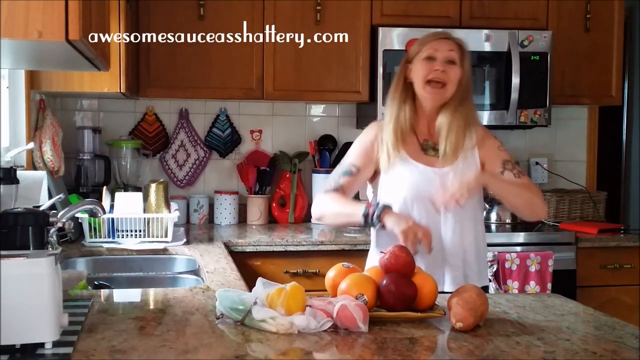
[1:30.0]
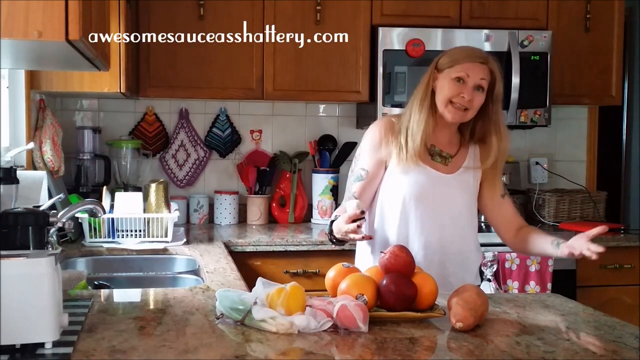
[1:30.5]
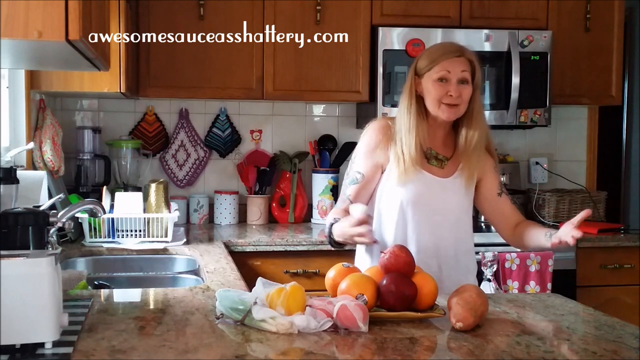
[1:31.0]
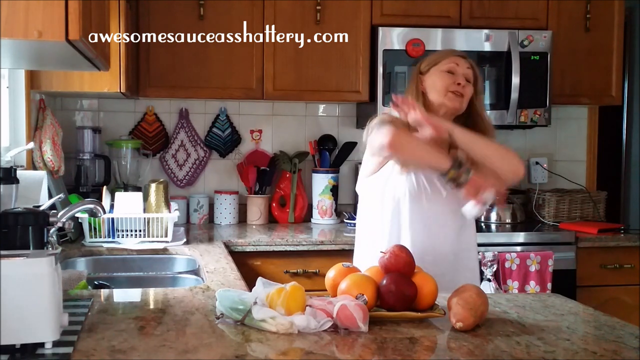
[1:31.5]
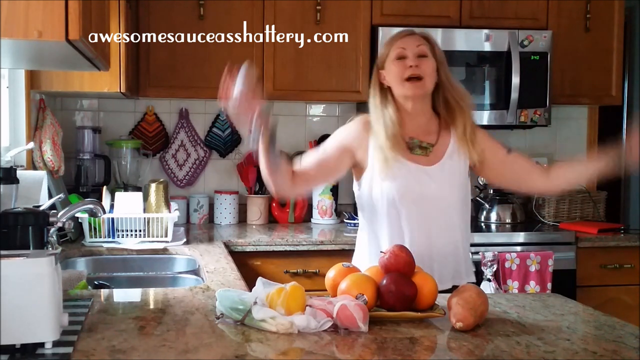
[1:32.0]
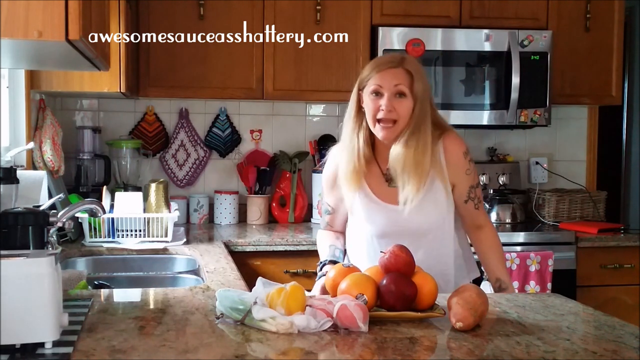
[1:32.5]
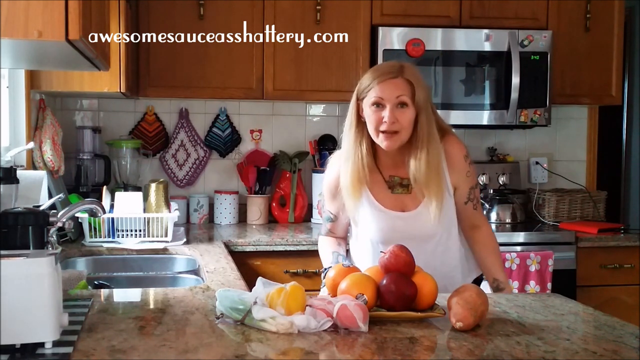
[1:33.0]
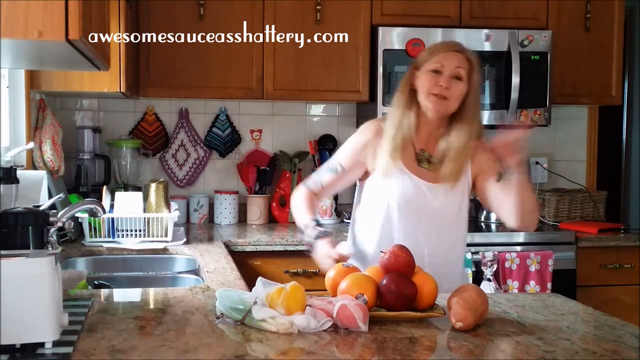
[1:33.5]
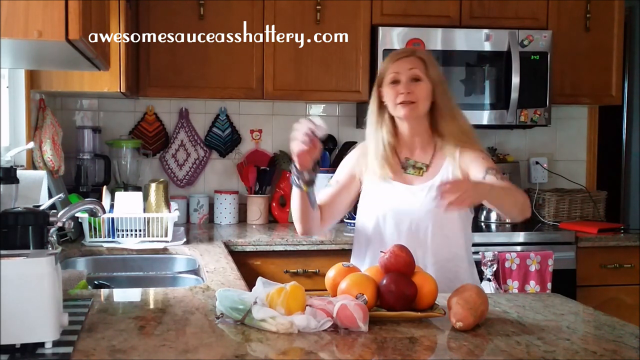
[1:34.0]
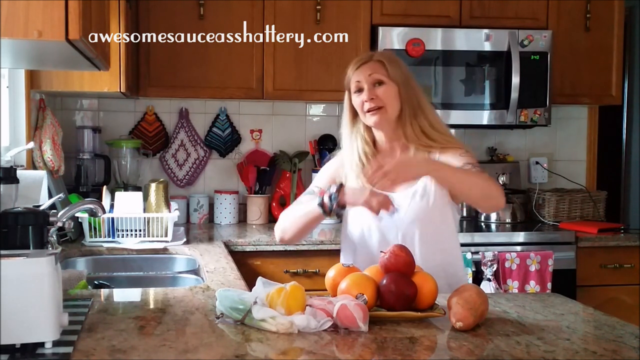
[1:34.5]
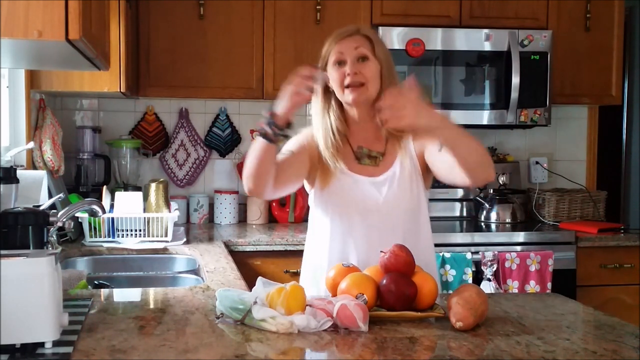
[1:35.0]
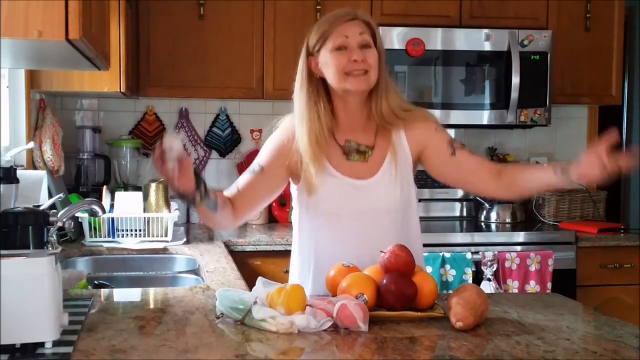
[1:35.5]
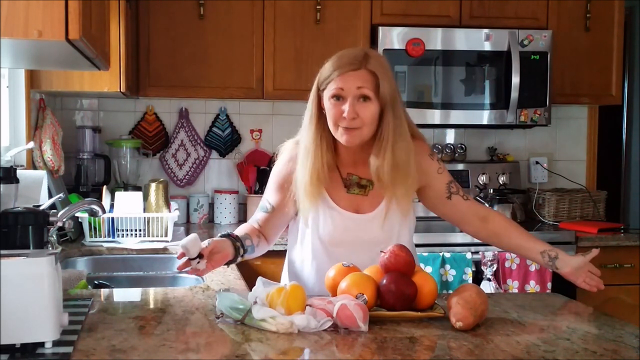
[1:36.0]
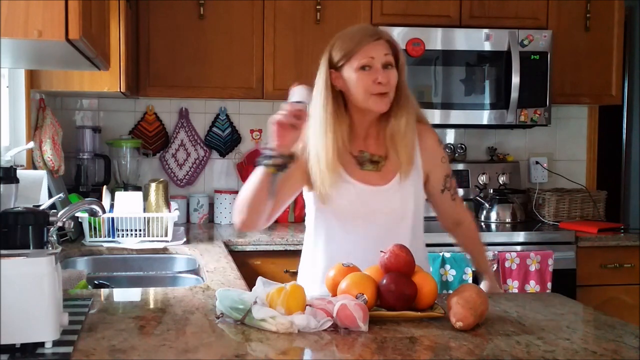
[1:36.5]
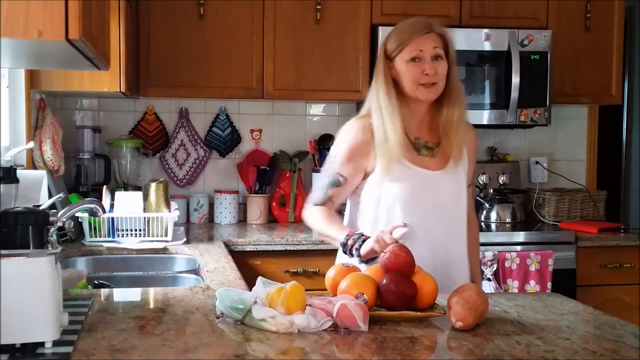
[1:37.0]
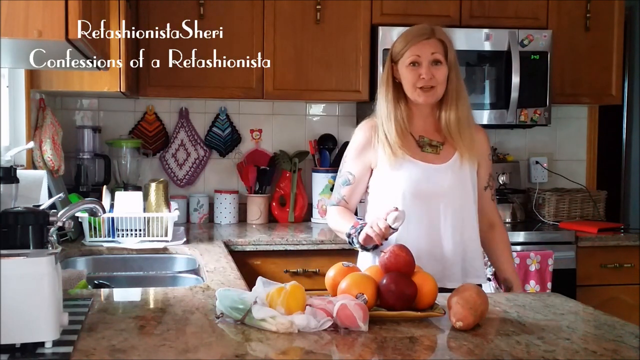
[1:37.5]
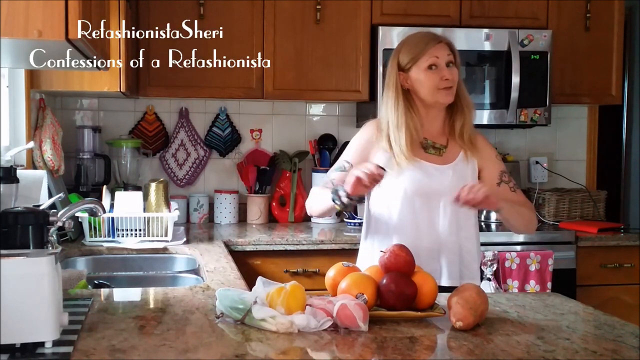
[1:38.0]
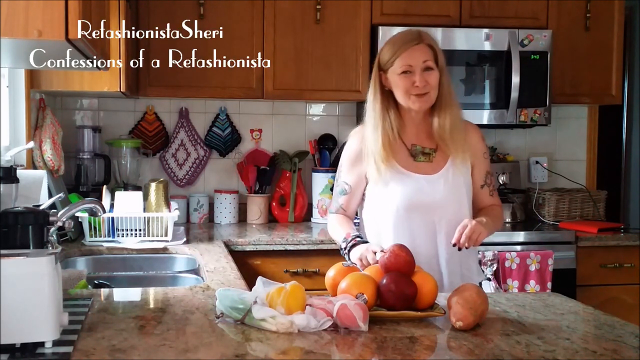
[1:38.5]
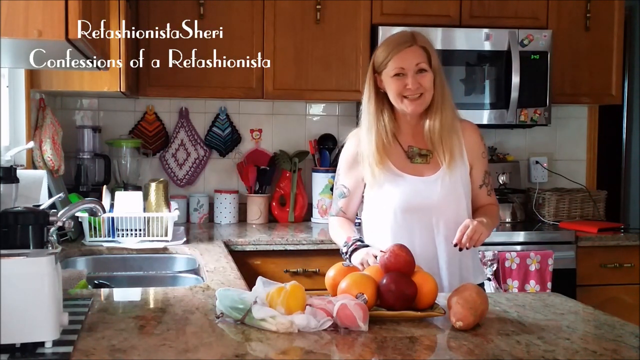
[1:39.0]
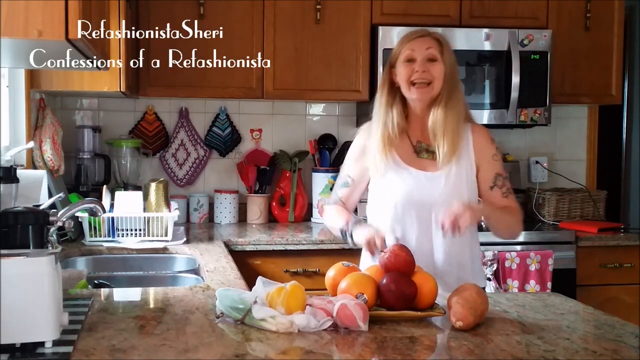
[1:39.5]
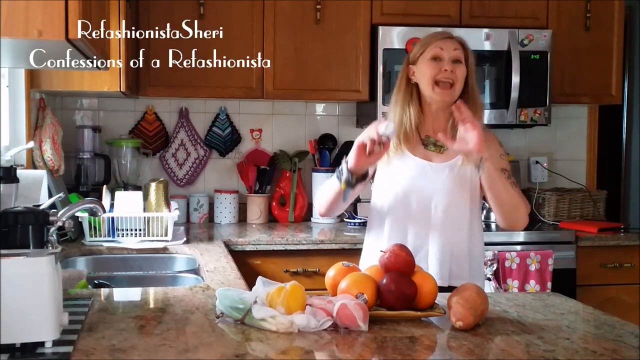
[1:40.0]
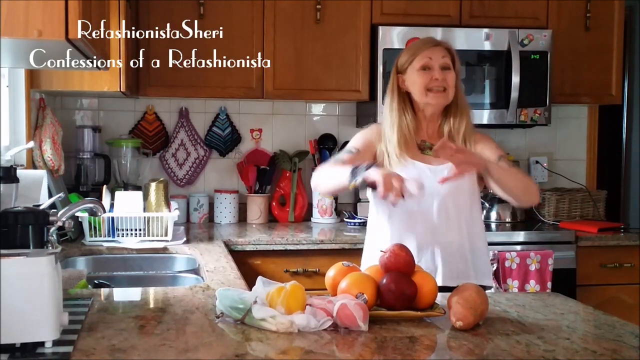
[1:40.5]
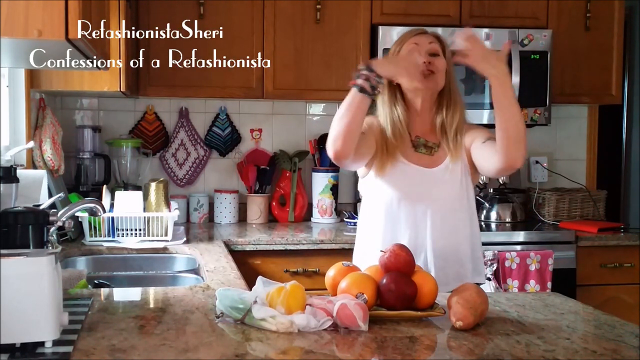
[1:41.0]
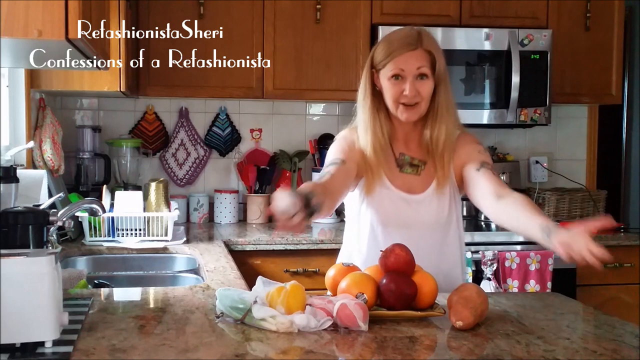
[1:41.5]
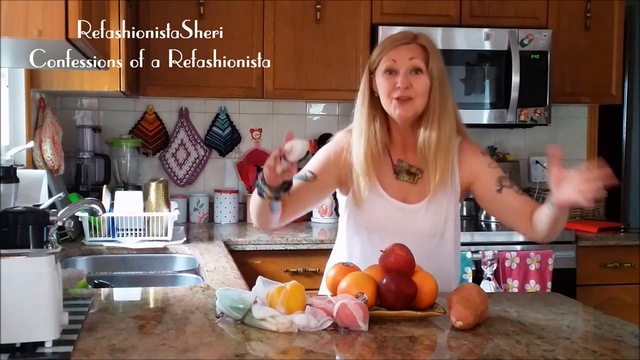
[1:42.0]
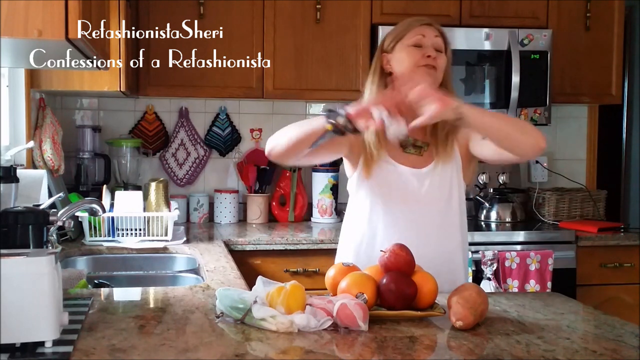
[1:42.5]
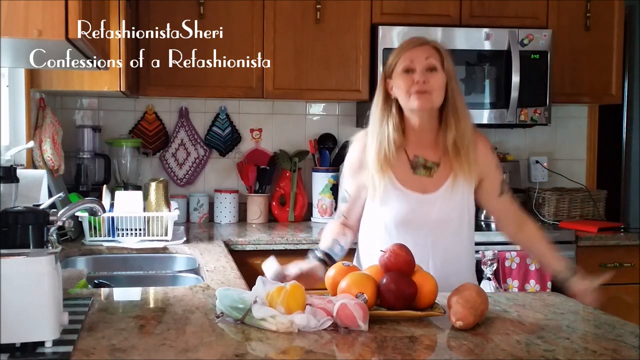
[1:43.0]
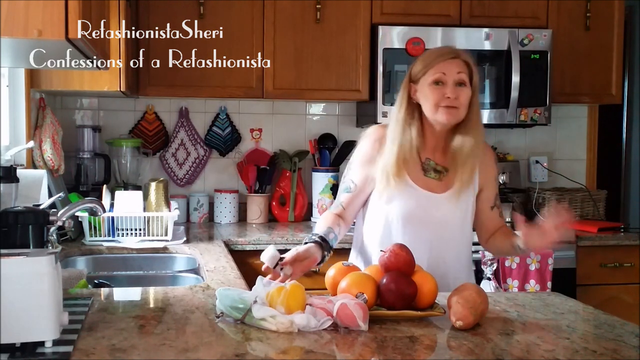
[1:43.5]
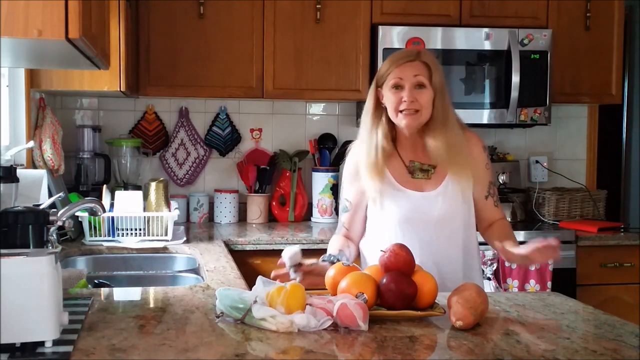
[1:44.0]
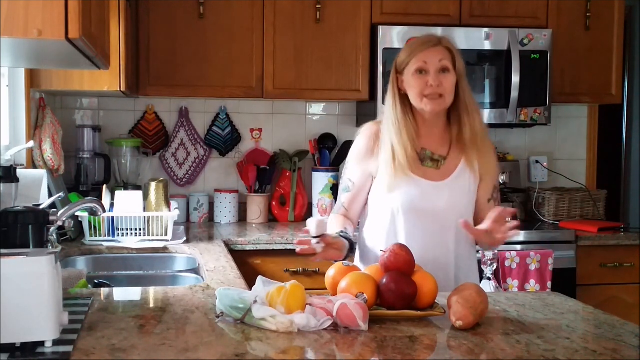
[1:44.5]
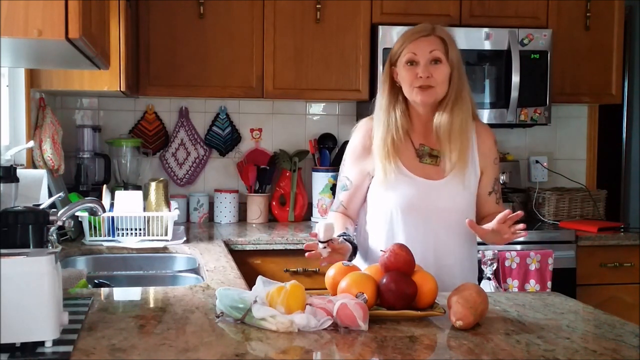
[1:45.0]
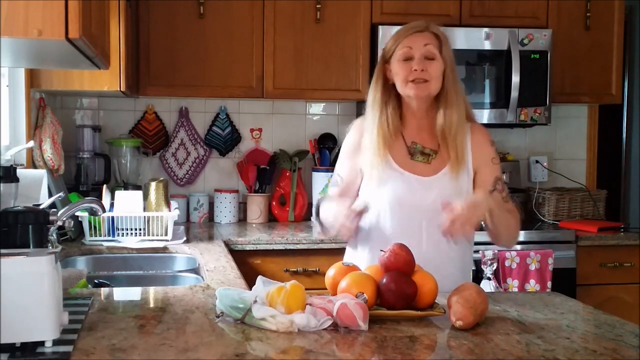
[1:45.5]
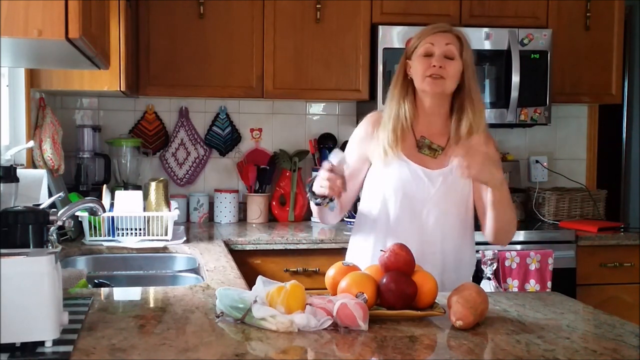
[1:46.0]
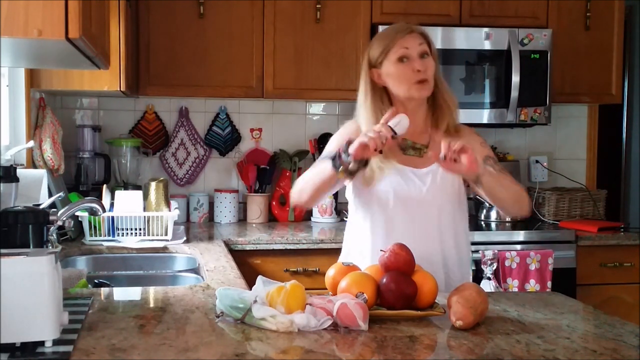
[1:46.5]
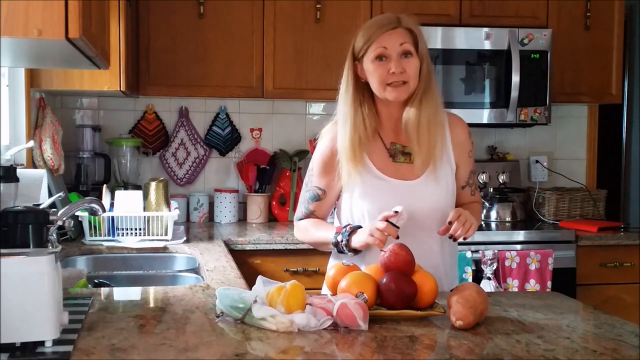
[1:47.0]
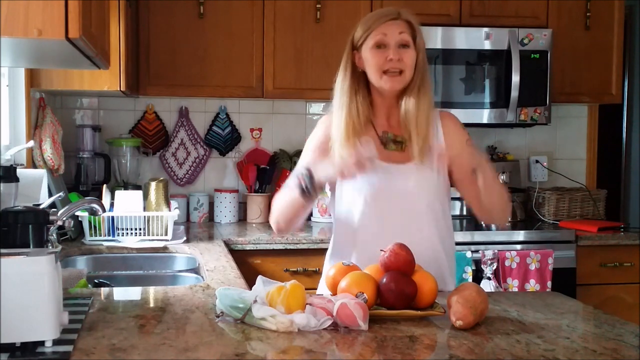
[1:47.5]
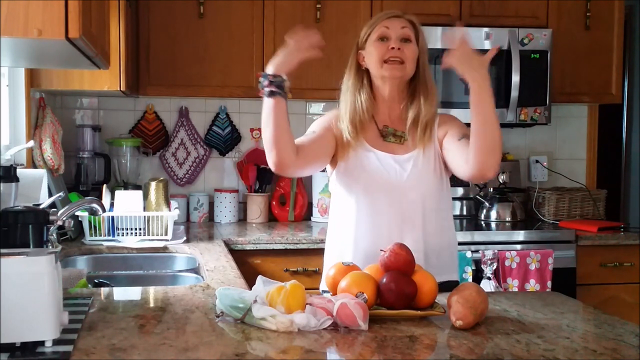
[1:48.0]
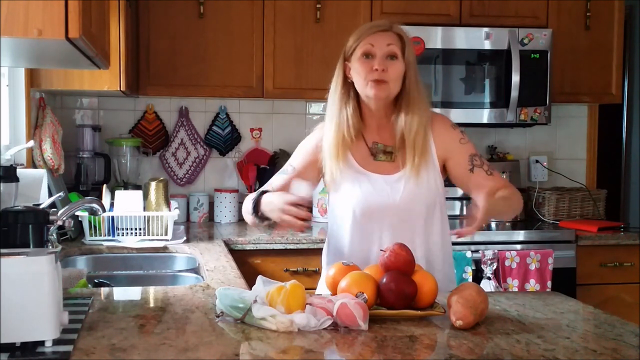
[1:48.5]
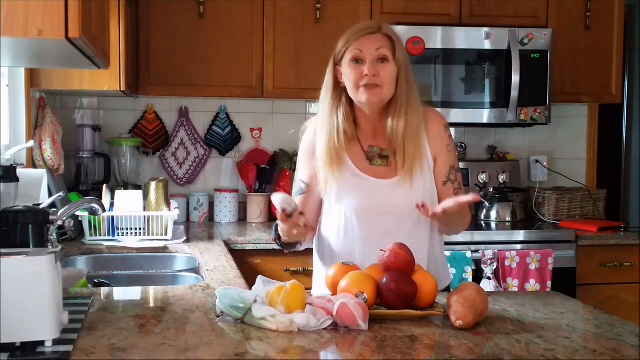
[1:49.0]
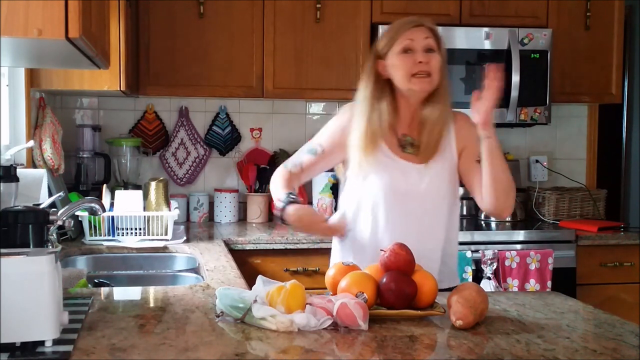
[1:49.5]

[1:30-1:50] The woman, an older lady of perhaps 45 to 50, has multiple tattoos and blonde hair that is long to her shoulder. A couple of foods and potatoes are lying on her counter, and there are lots of cups and utensils all over the kitchen, which is very clean and put together. Her microwave is visible.